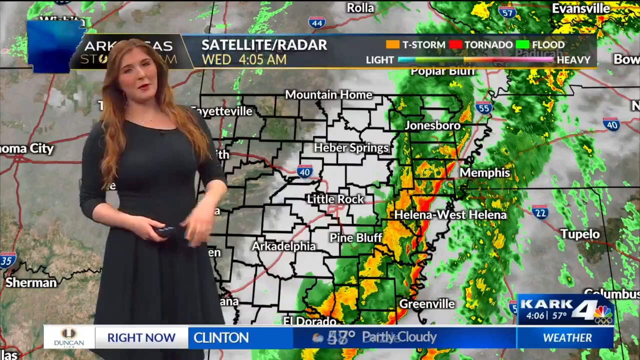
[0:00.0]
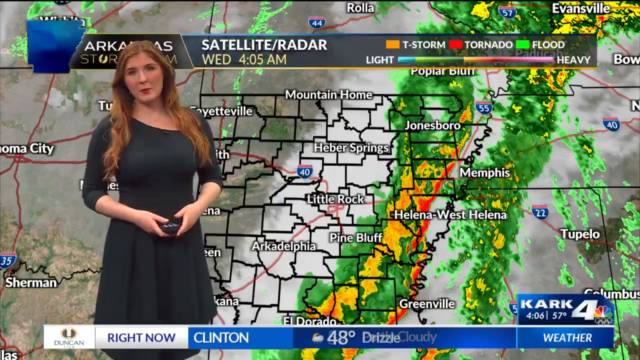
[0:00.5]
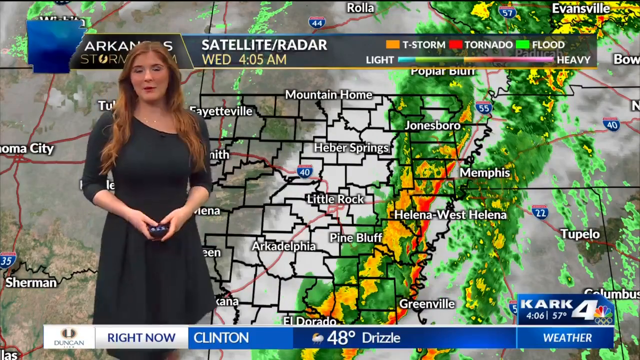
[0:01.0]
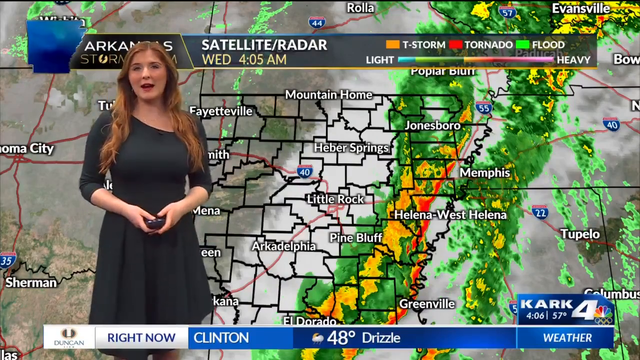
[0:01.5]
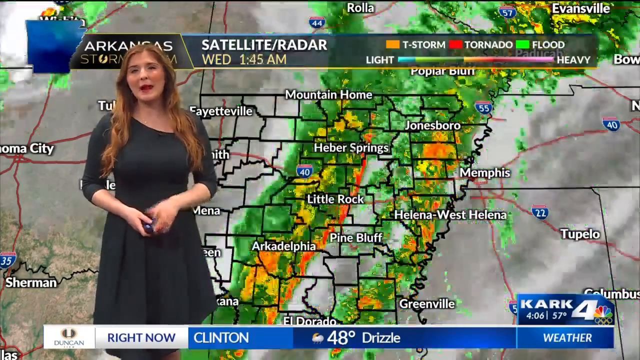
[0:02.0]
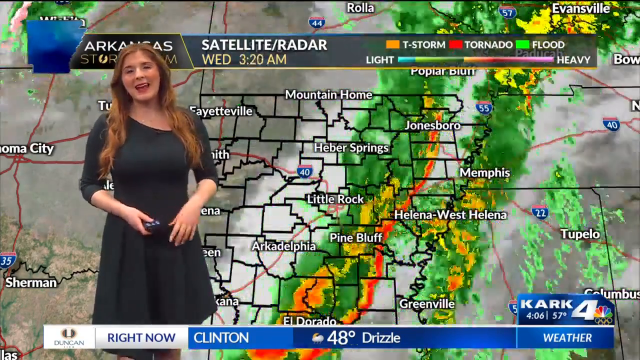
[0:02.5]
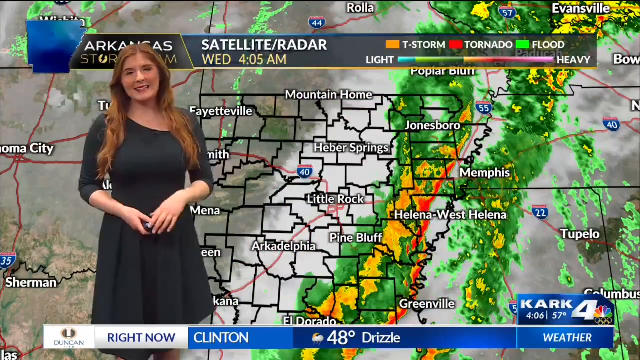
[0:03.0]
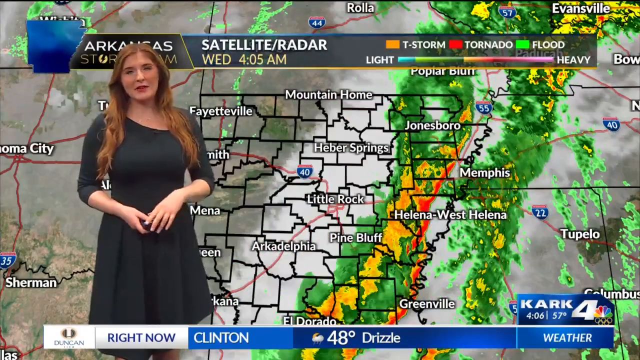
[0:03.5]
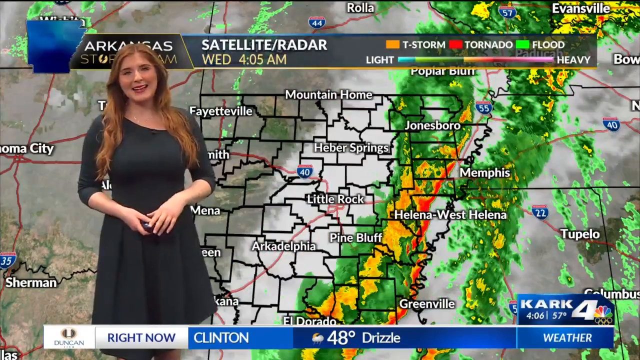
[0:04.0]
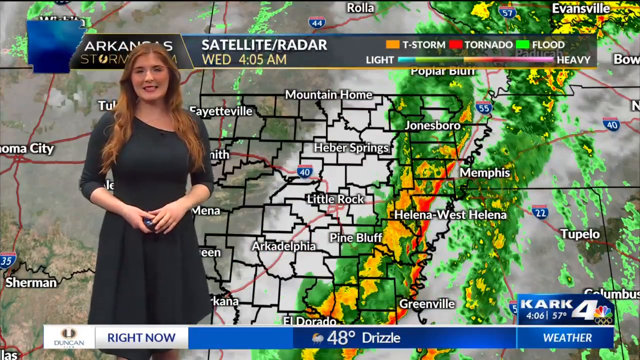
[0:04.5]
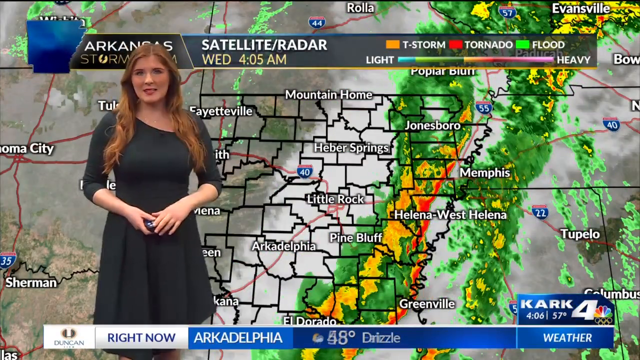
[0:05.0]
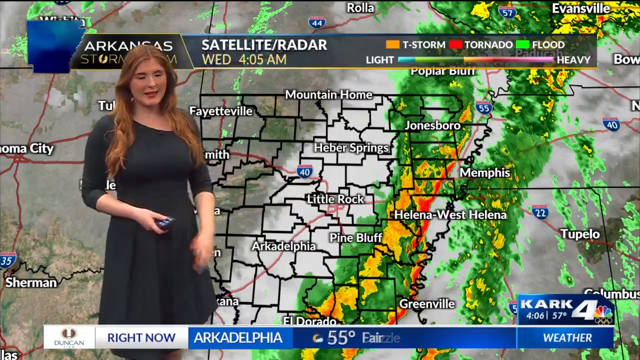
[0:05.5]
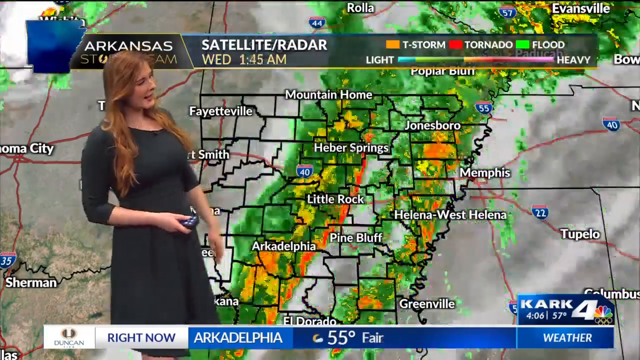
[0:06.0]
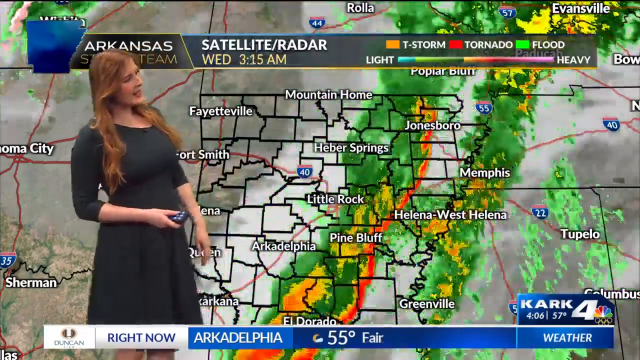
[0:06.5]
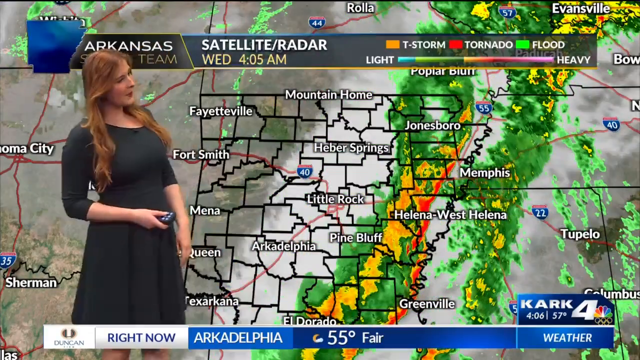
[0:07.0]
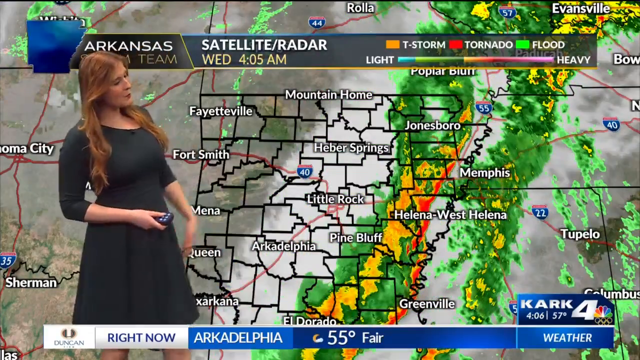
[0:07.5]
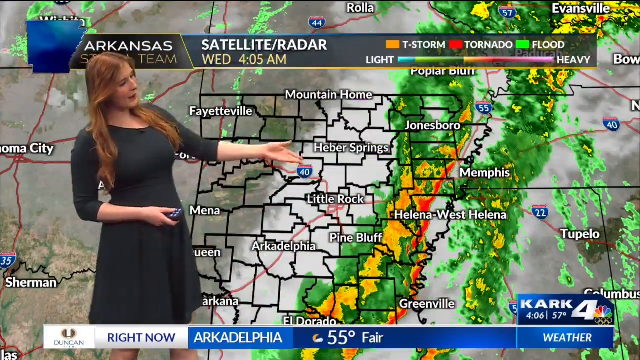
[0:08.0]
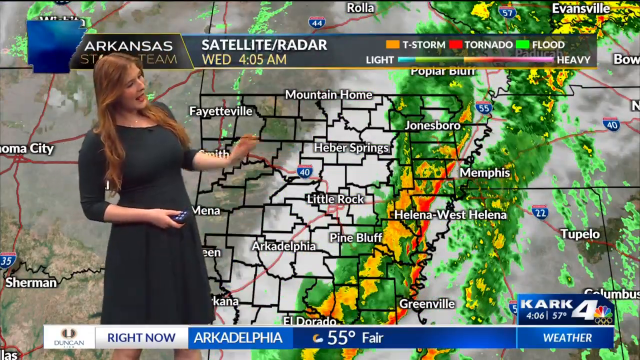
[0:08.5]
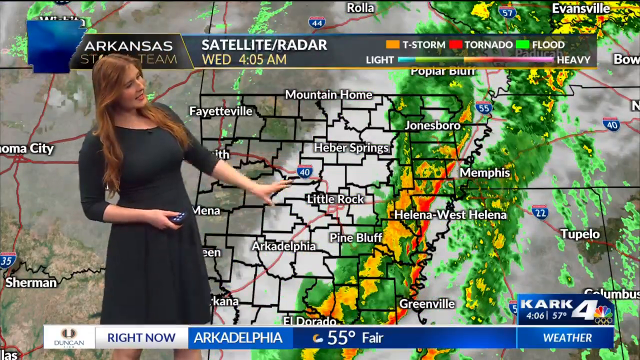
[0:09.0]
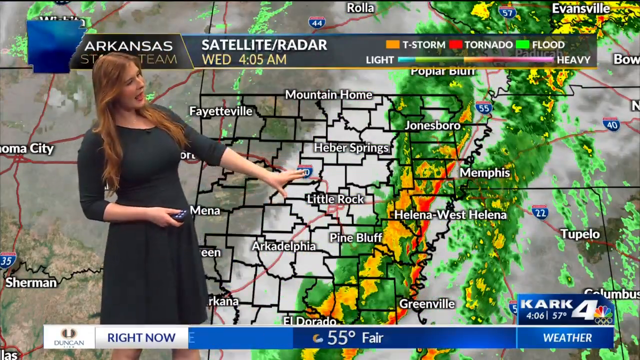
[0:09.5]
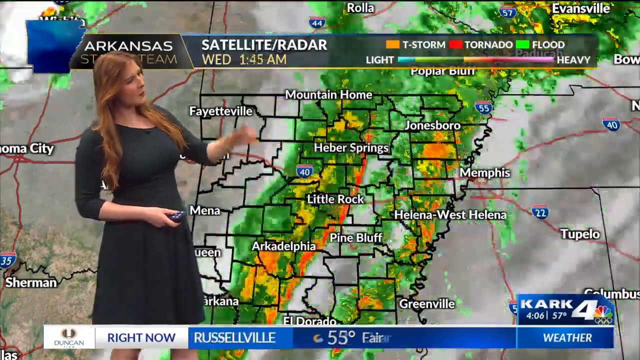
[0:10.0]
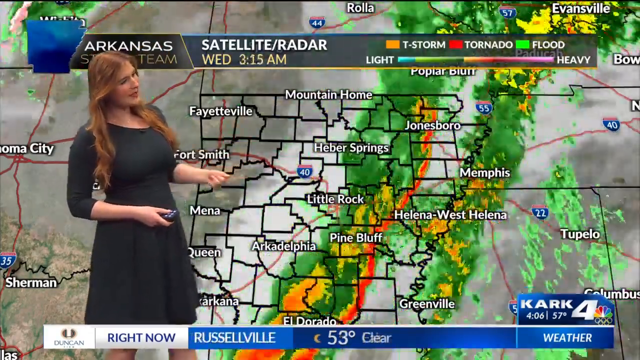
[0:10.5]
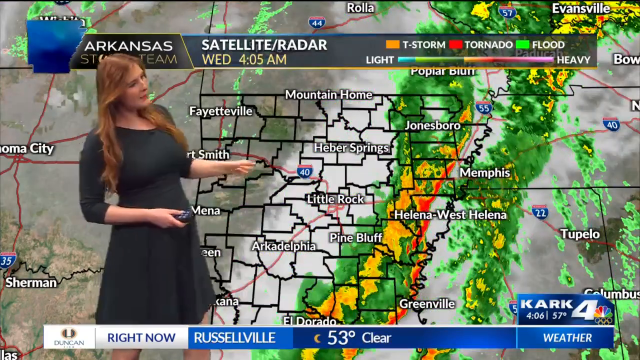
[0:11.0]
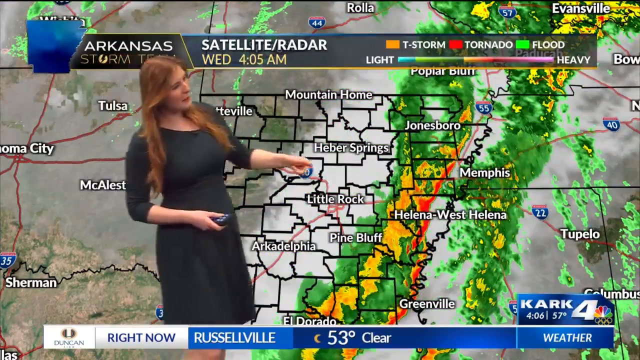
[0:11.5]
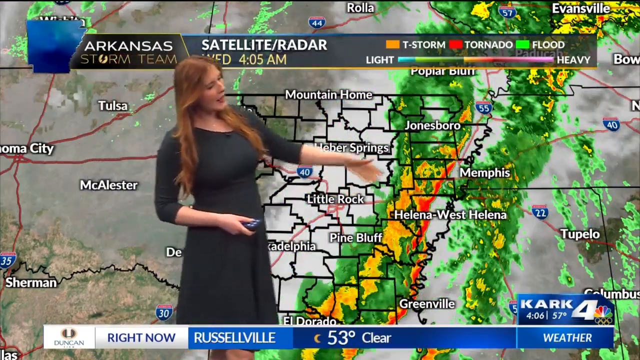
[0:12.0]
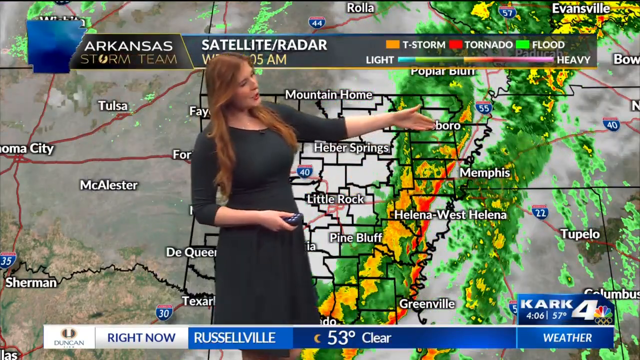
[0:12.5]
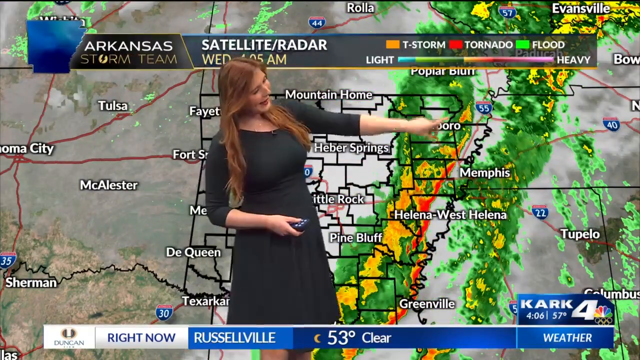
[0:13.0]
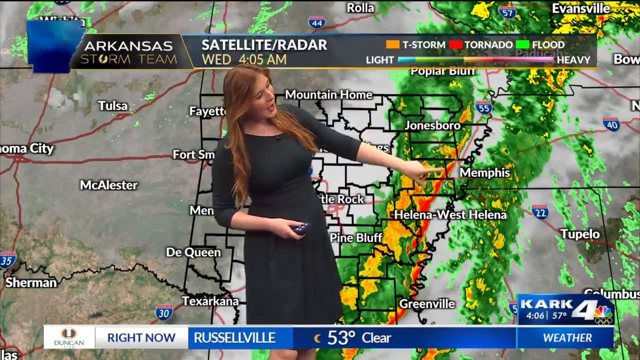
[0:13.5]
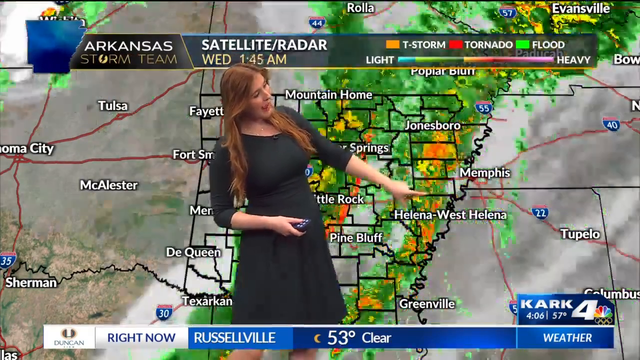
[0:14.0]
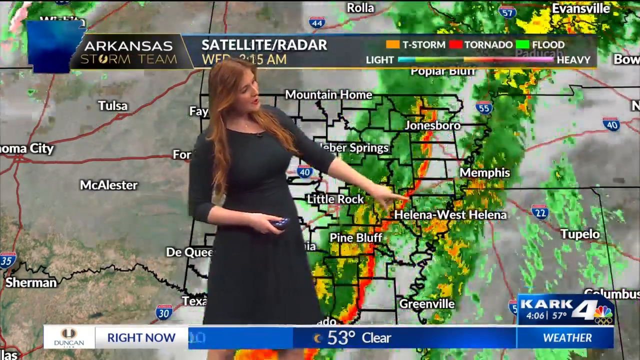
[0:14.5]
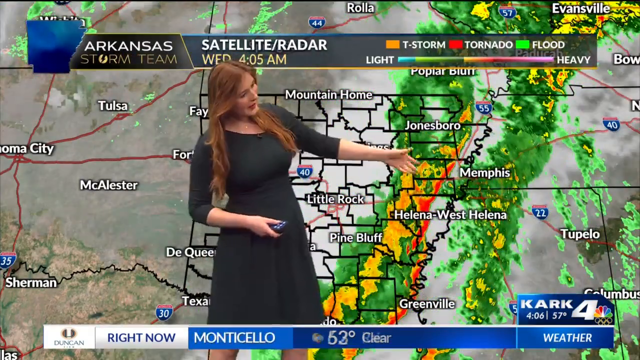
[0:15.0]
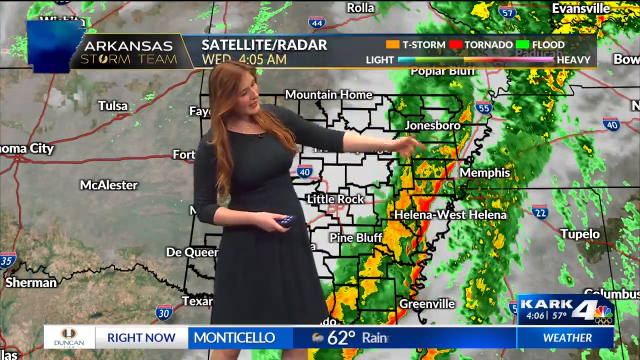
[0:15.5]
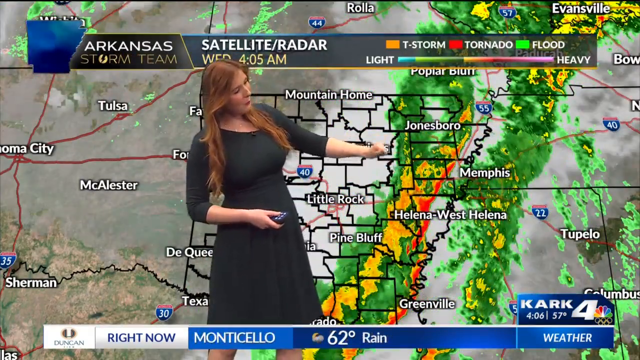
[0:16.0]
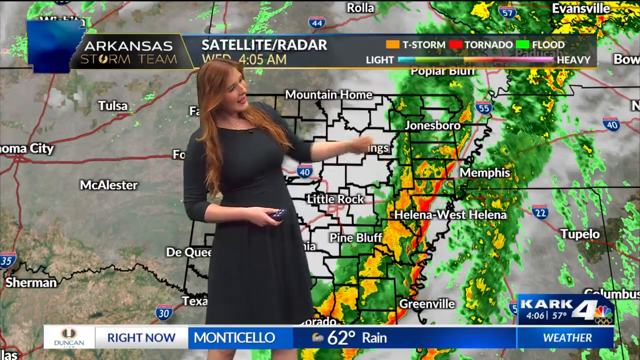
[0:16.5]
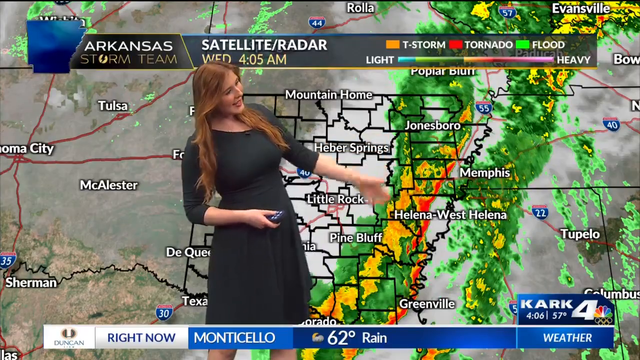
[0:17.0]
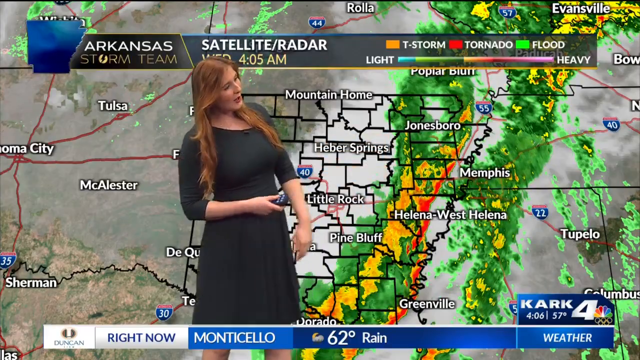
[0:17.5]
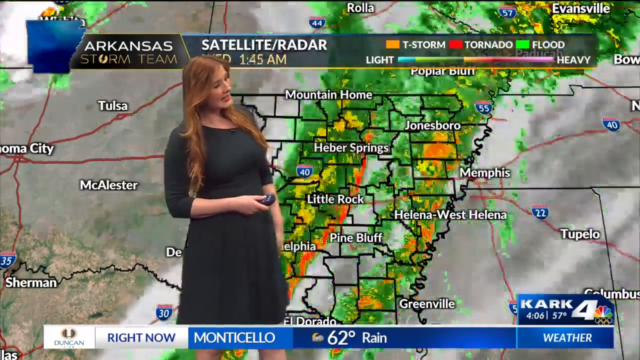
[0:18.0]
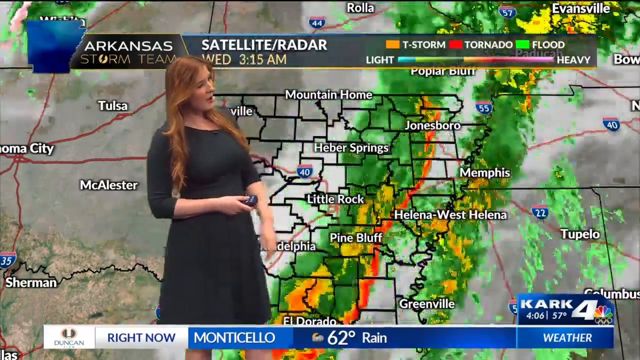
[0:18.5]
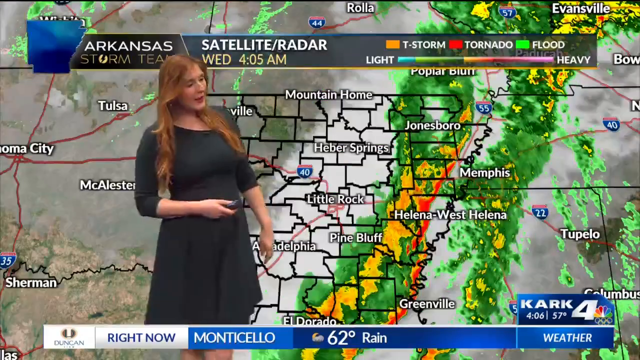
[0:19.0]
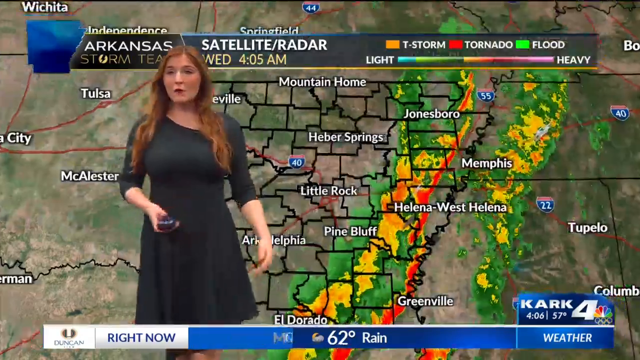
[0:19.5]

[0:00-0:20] A female weather reporter presents a weather report. She has long, wavy orange hair that reaches her breast area, and she wears a black dress that ends just above her knees. She holds a remote in her right hand. Behind her is a weather map showing many places, including Fayetteville, Mountain Home, Herba Springs, Jonesboro, Little Rock, Pine Bluff, Akkadelphia and Greenville. At the top is a legend of indications: orange indicates a sea storm, red indicates a tornado and green indicates floods. A colour scale runs from blue for light, up through green, dark green, orange, pink, red and purple.